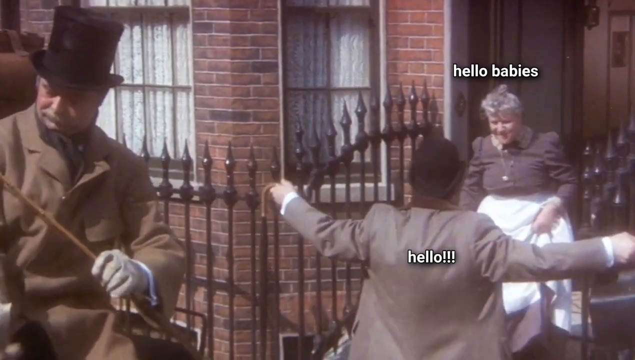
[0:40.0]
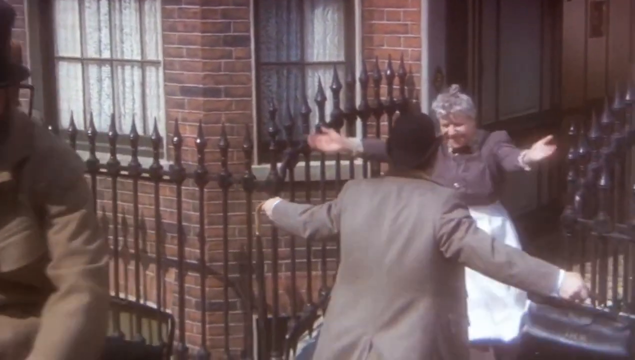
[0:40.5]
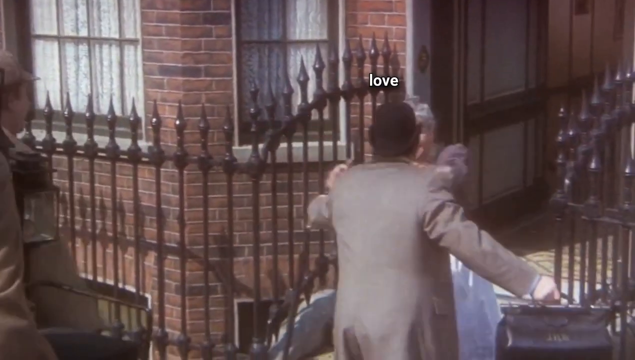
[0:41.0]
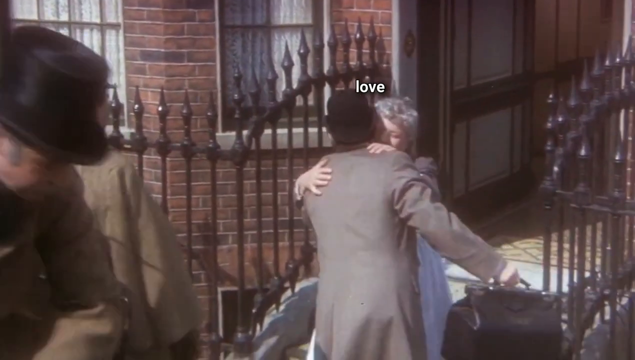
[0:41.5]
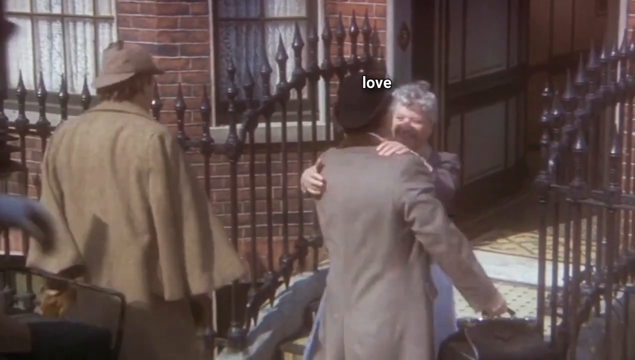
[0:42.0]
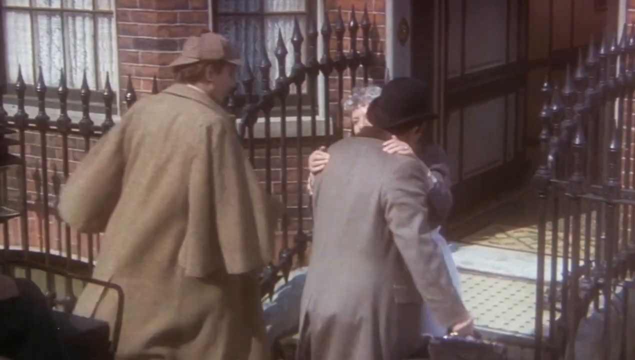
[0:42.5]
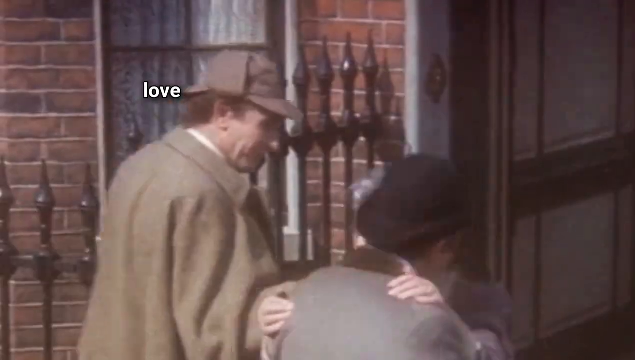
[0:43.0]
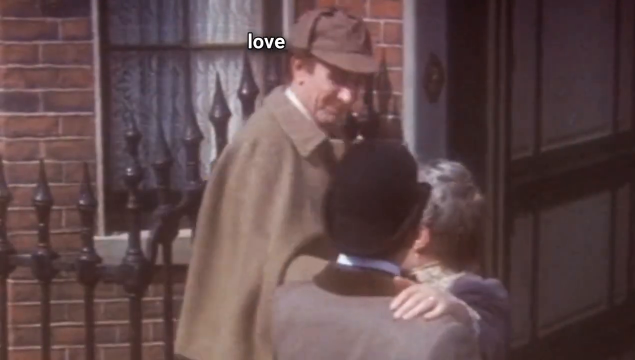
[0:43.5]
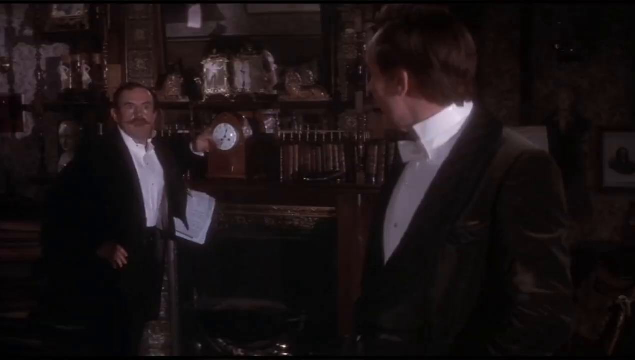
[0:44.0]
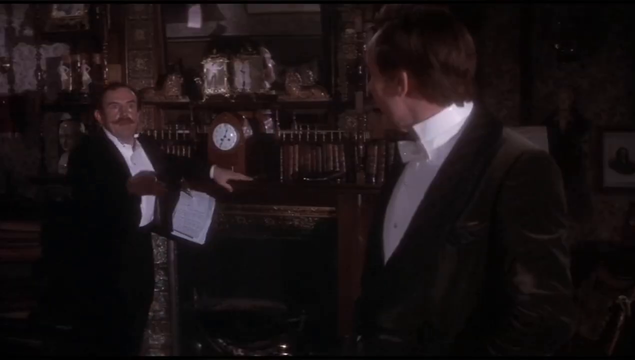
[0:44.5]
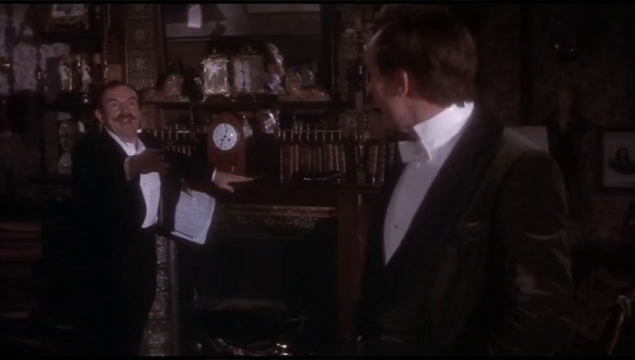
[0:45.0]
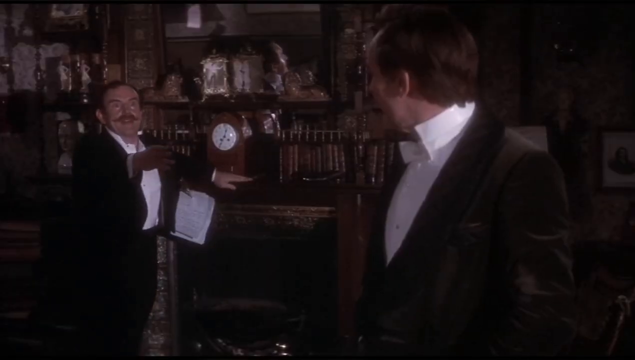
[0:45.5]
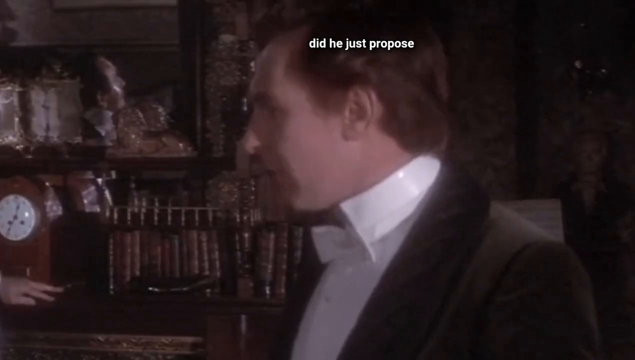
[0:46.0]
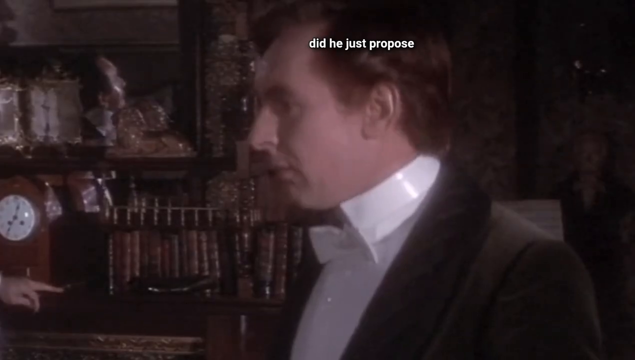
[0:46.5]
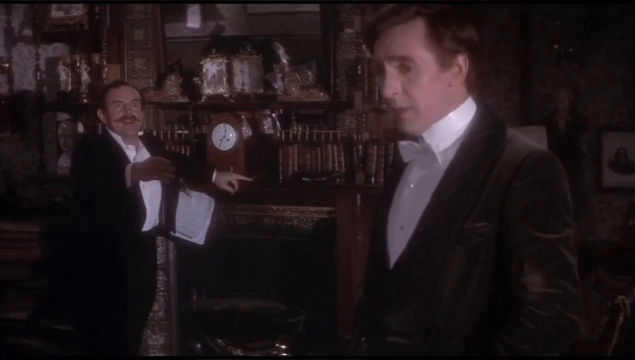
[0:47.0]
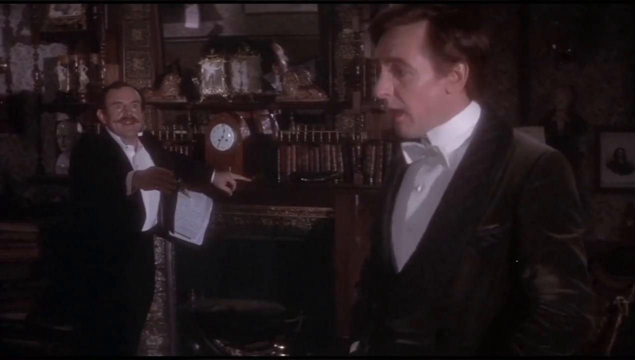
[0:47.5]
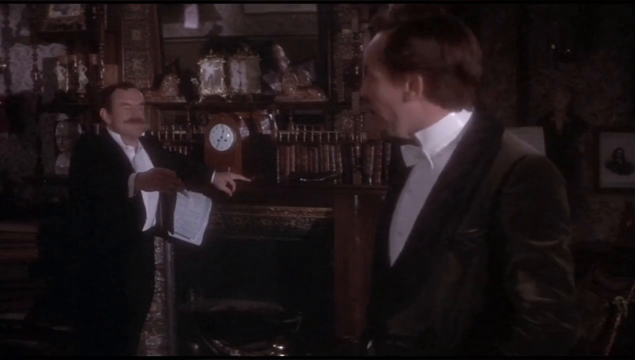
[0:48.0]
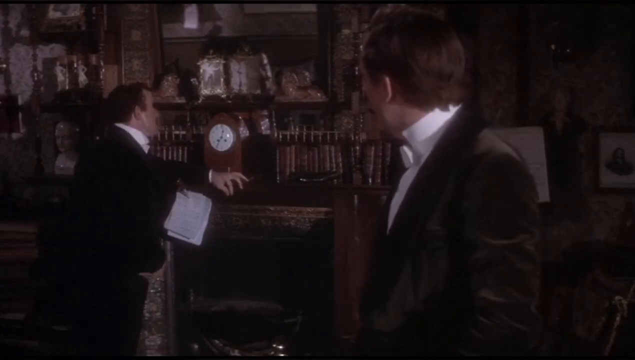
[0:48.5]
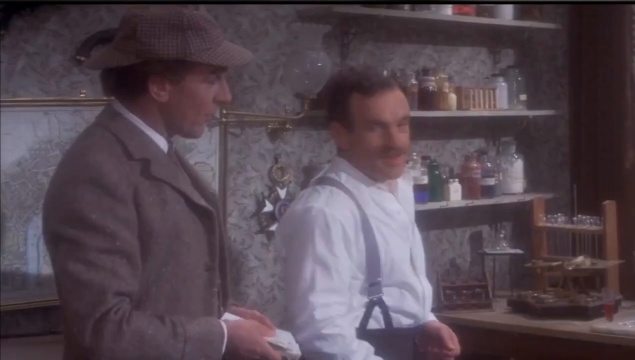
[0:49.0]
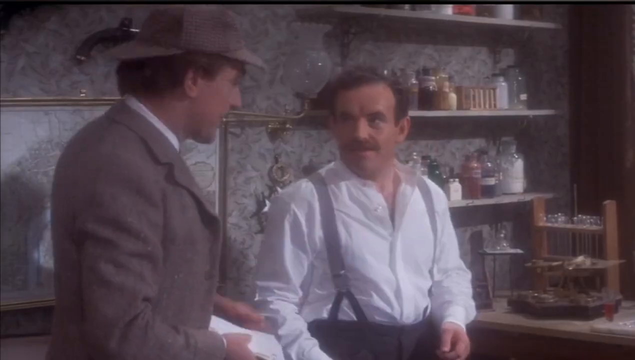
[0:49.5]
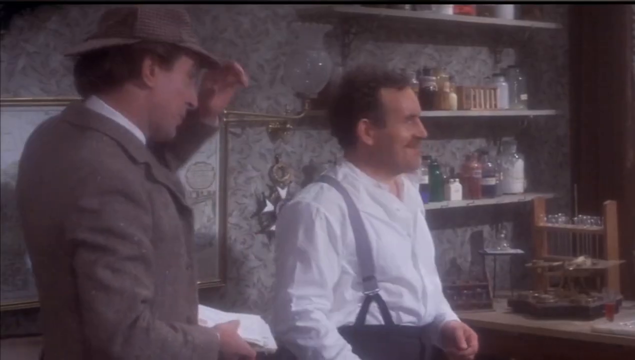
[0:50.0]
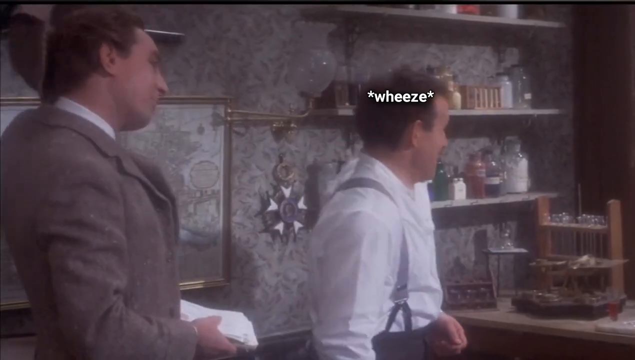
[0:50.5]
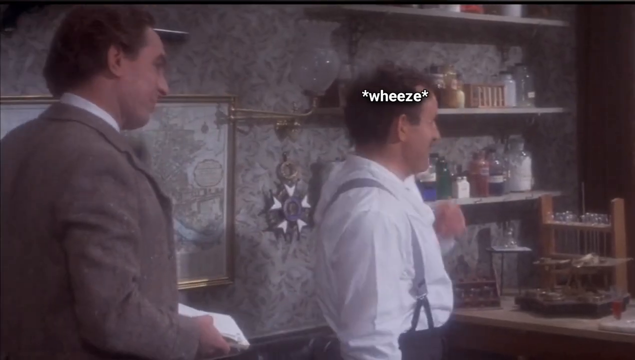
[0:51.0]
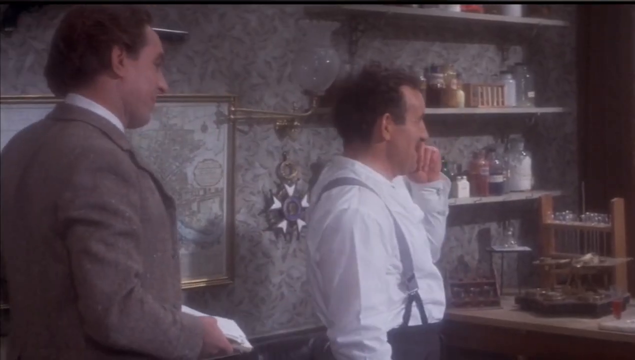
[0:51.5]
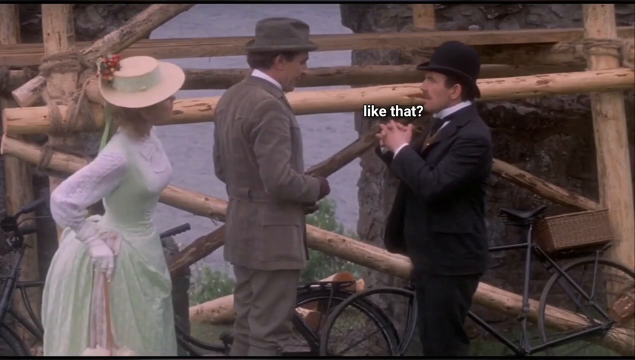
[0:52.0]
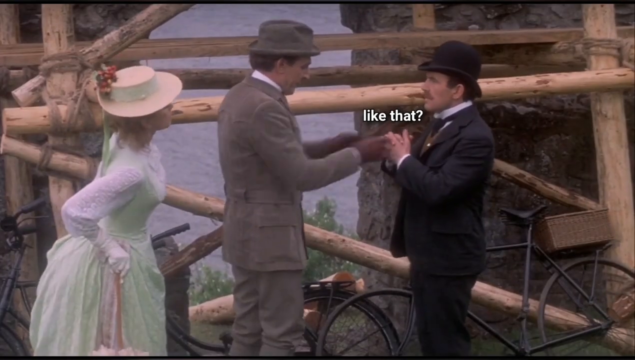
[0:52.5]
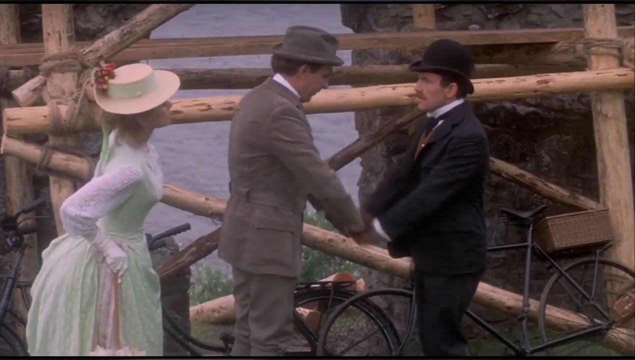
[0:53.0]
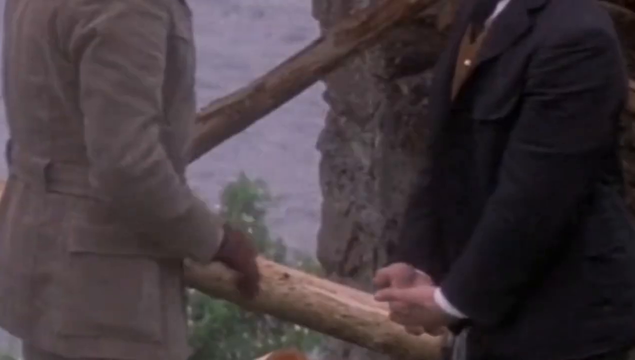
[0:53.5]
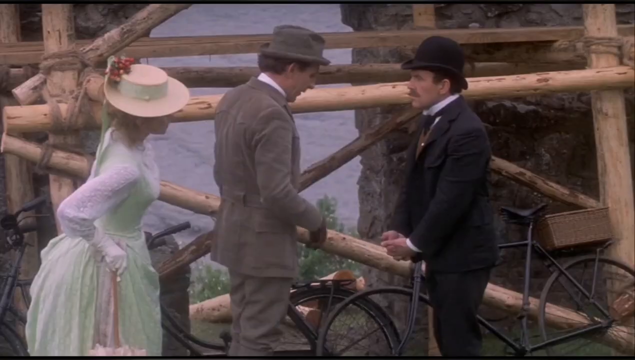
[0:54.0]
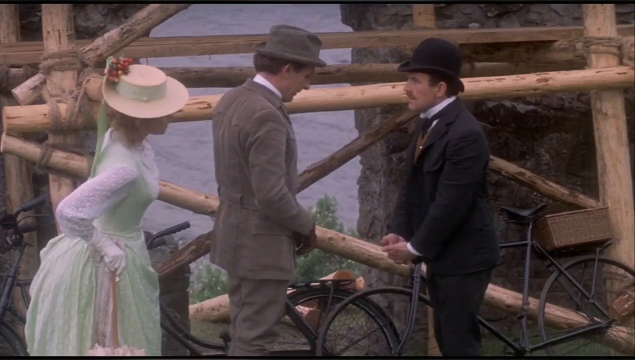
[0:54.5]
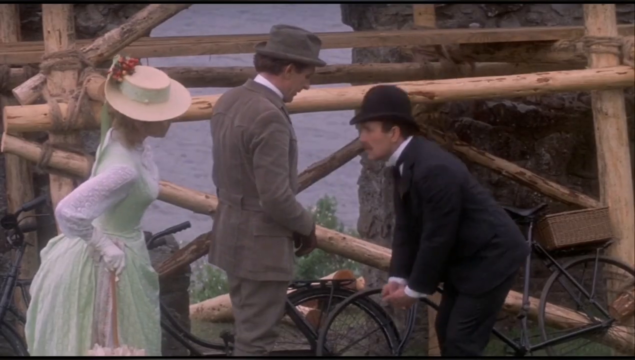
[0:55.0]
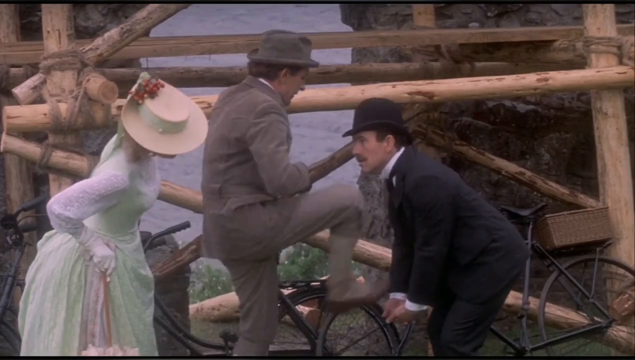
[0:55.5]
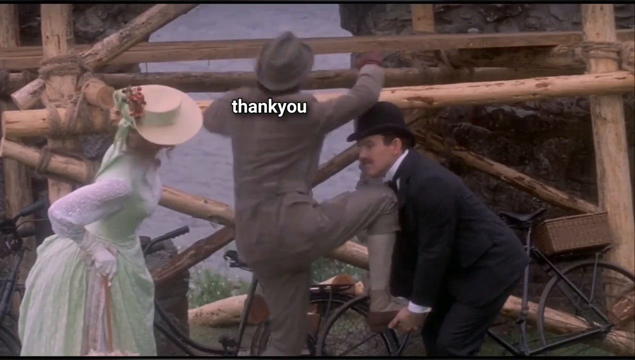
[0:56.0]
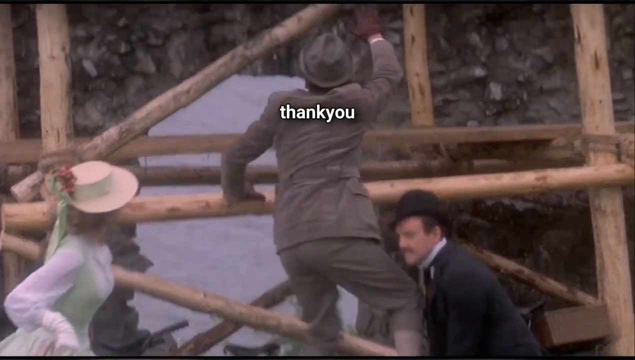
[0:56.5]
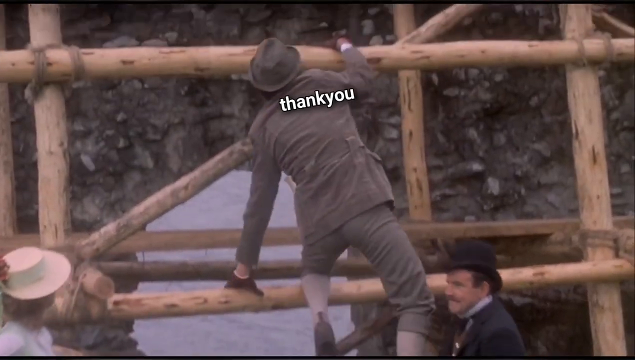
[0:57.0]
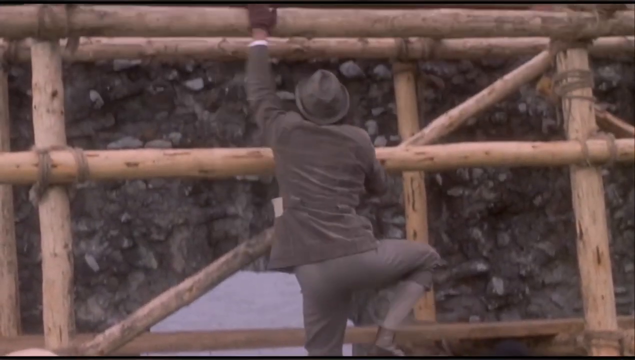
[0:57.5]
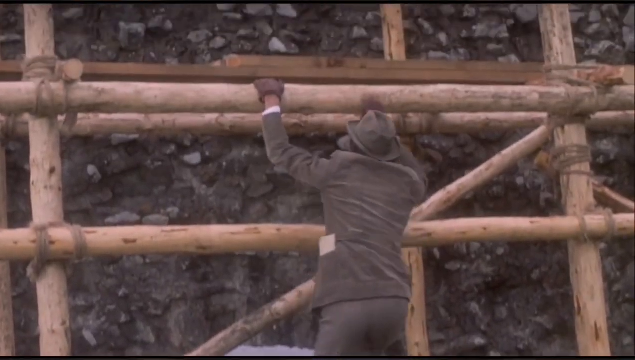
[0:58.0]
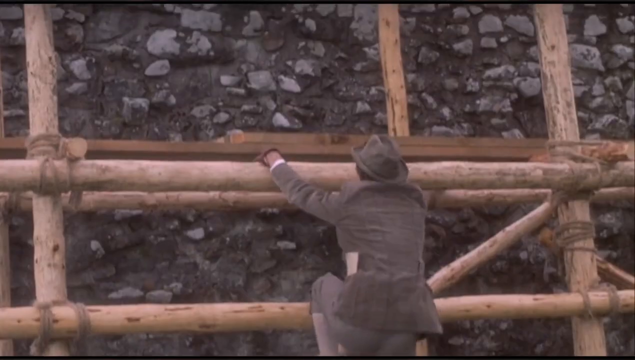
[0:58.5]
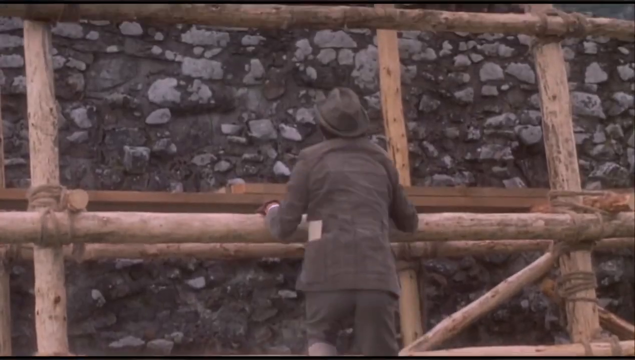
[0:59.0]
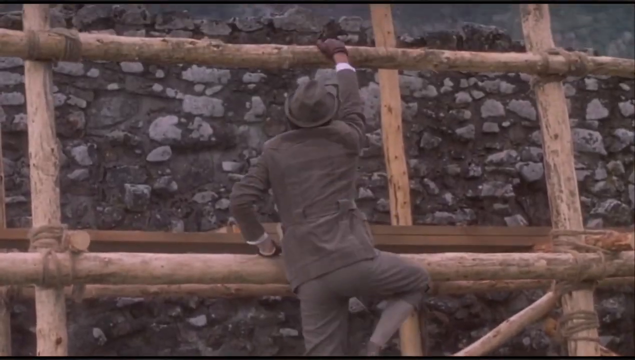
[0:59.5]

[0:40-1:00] A gentleman in a gray suit jacket and a black hat walks through a black wrought iron gate up to an older woman with gray hair, who wears a long-sleeved shirt and a white apron. He carries a suitcase. Behind them is a coach driver in a black top hat, a beige trench coat and white gloves, with a crop in his hand. Two gentlemen in black suits with white shirts and white bow ties talk. A gentleman in a beige jacket, beige pants and a beige hat climbs a wooden-type structure outside. The shots are quick cuts from different parts of the TV show. The men in black jackets appear again, with a large glass mirror on the wall behind them. An old-style wooden clock is on top of the fireplace's large wooden mantle, and lots of different objects and pictures are on the wall.